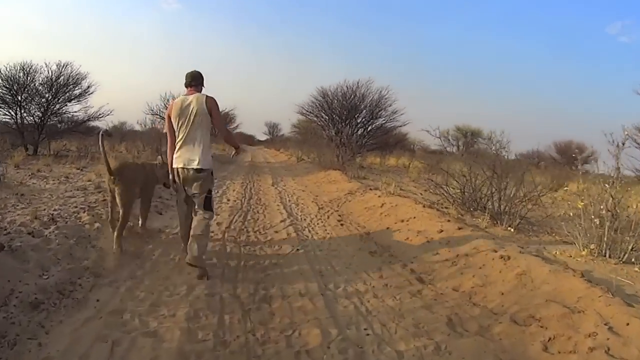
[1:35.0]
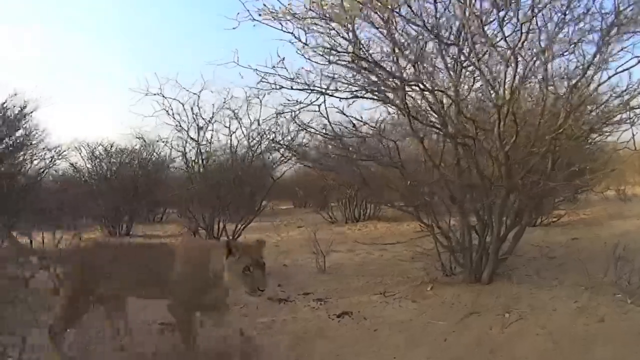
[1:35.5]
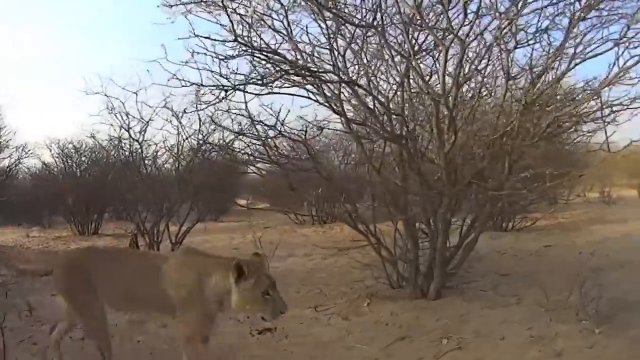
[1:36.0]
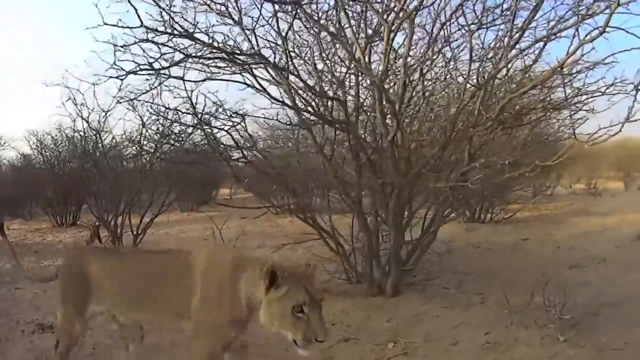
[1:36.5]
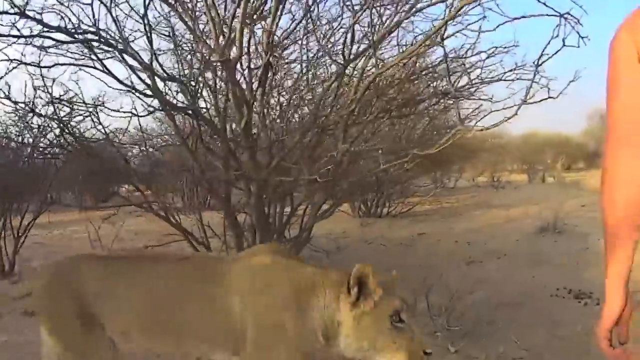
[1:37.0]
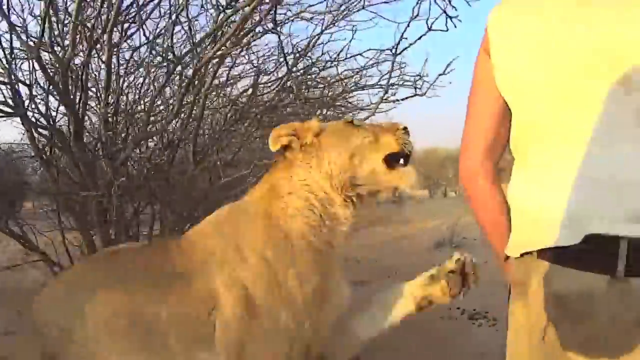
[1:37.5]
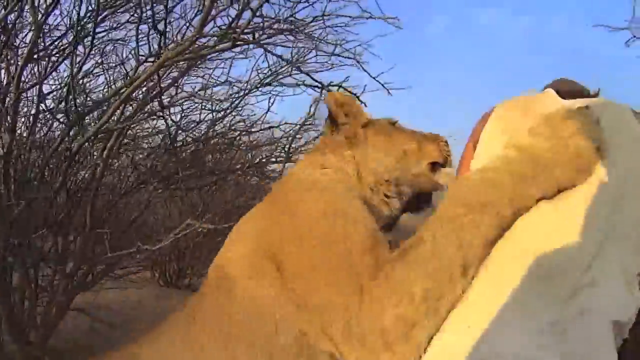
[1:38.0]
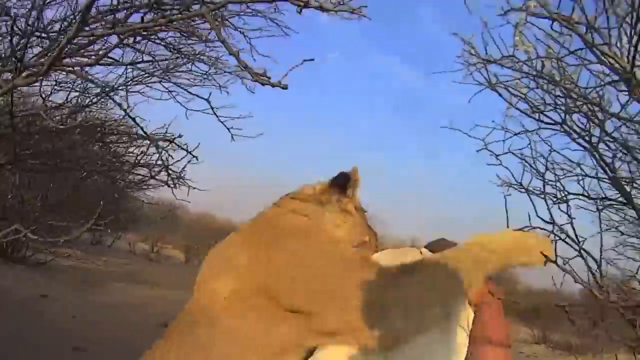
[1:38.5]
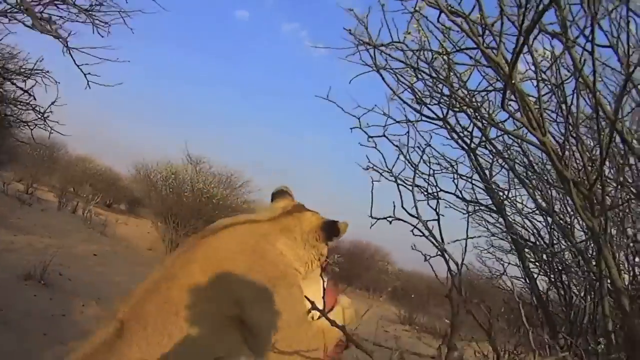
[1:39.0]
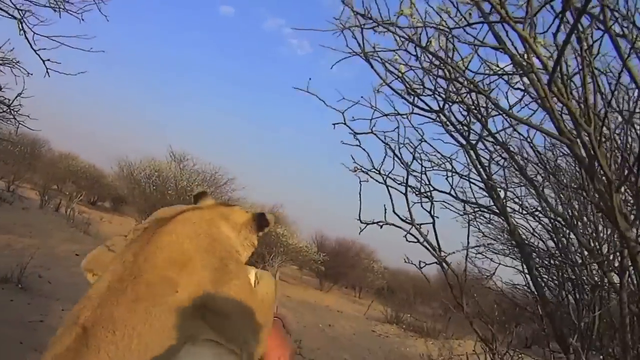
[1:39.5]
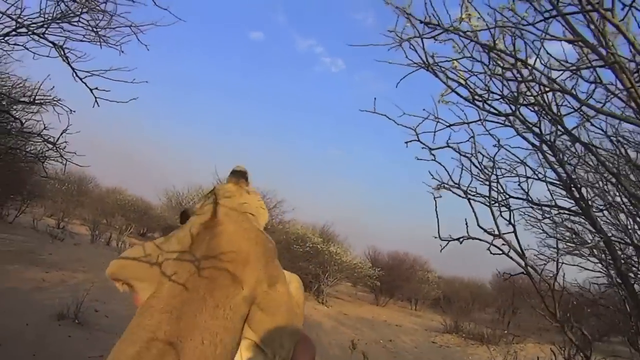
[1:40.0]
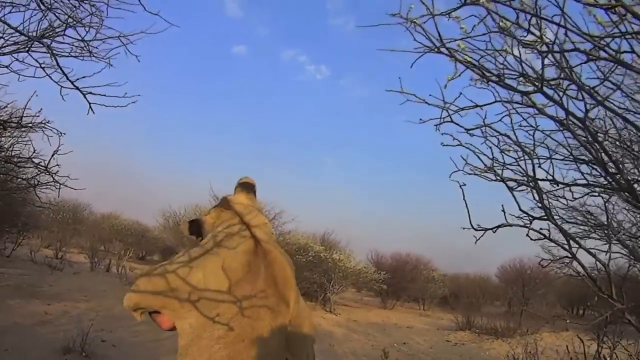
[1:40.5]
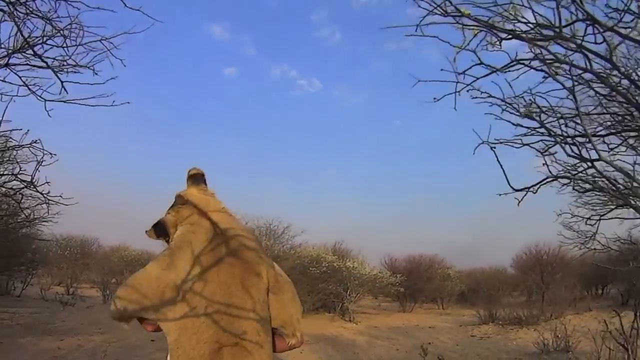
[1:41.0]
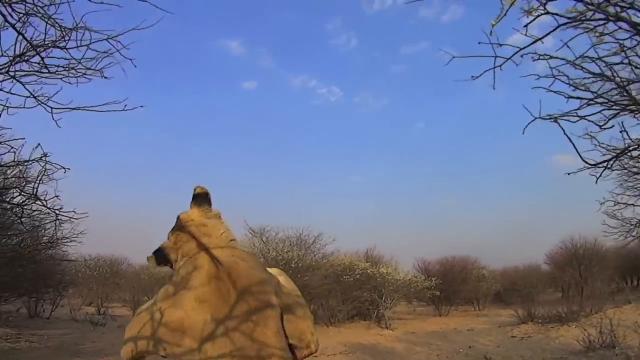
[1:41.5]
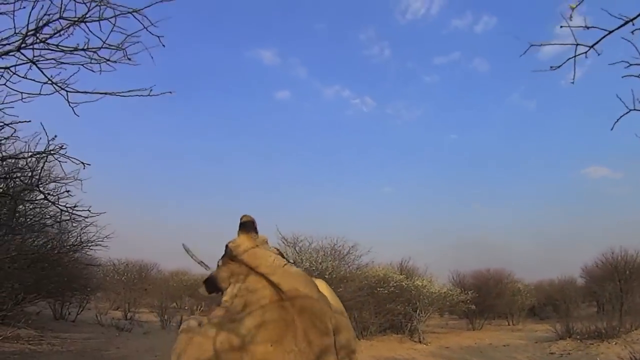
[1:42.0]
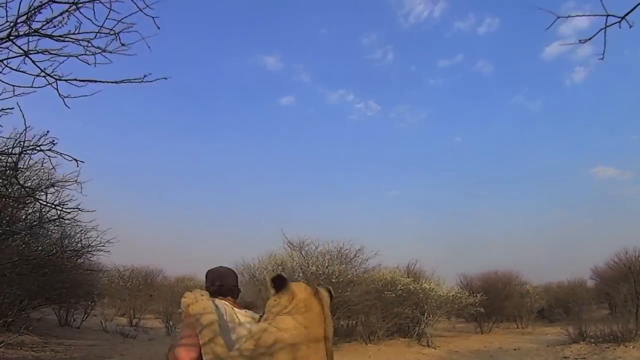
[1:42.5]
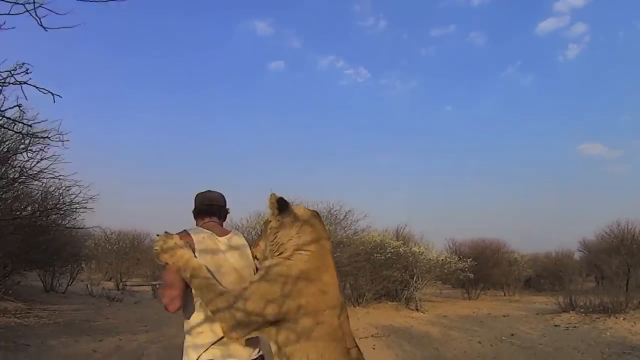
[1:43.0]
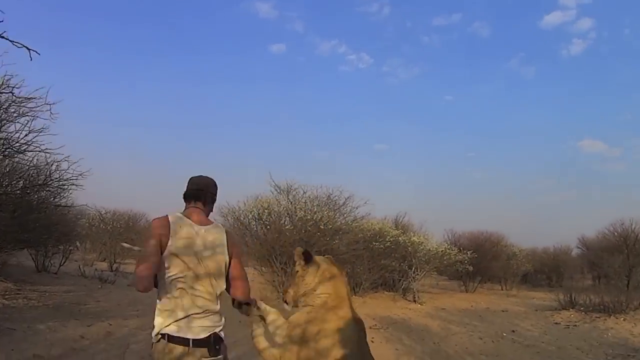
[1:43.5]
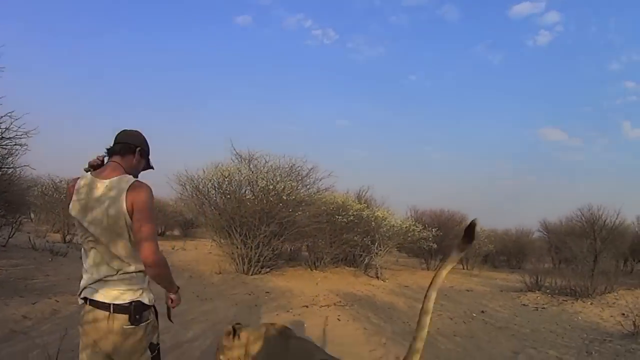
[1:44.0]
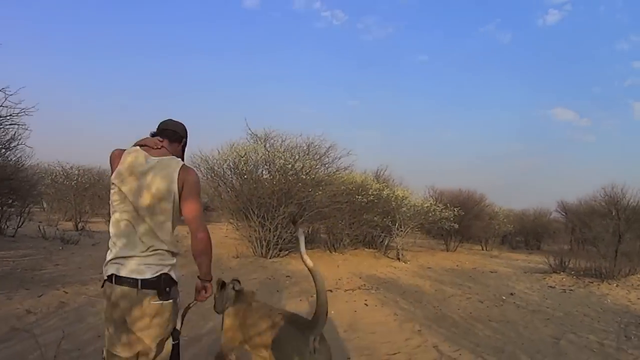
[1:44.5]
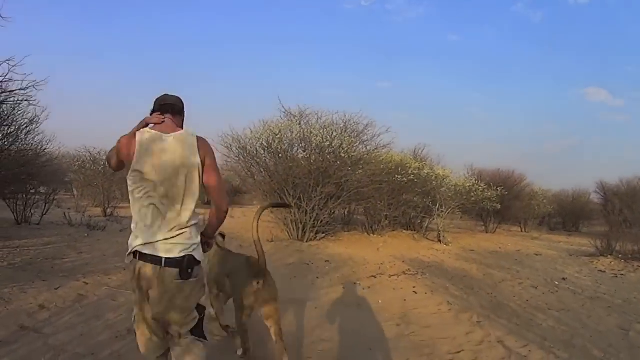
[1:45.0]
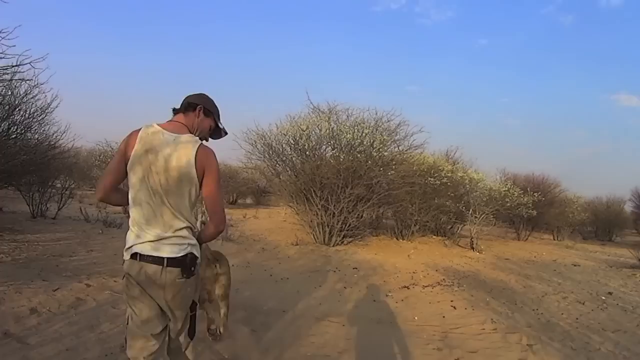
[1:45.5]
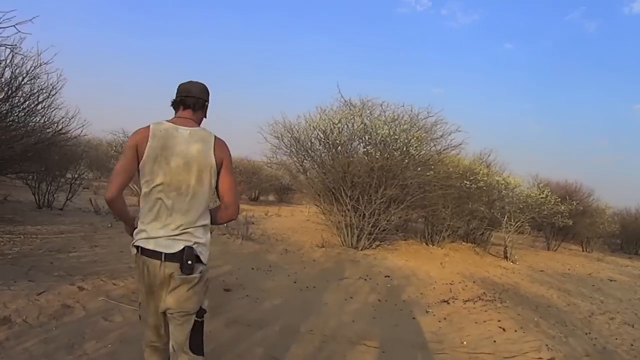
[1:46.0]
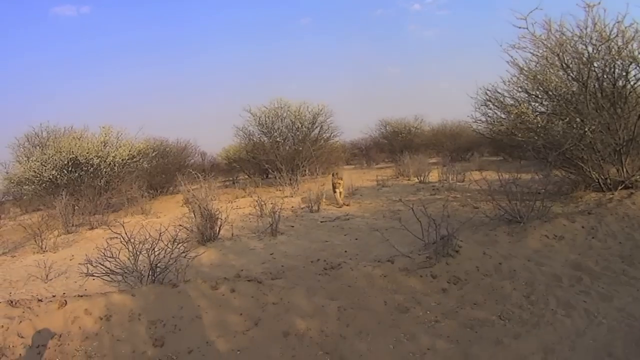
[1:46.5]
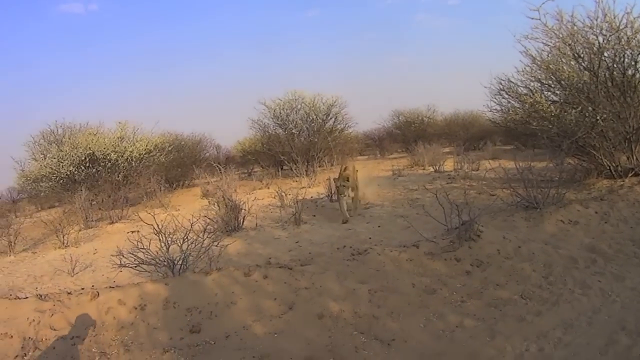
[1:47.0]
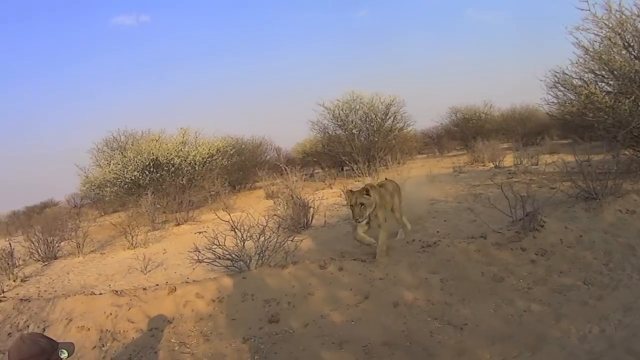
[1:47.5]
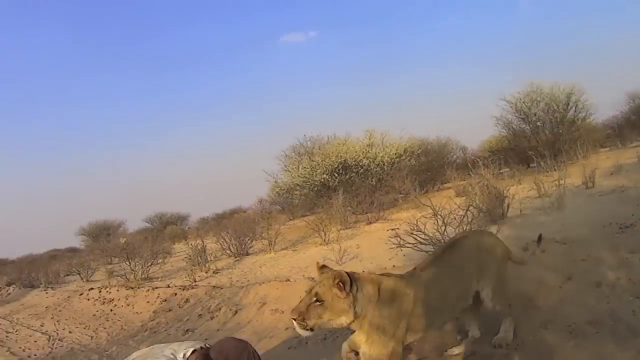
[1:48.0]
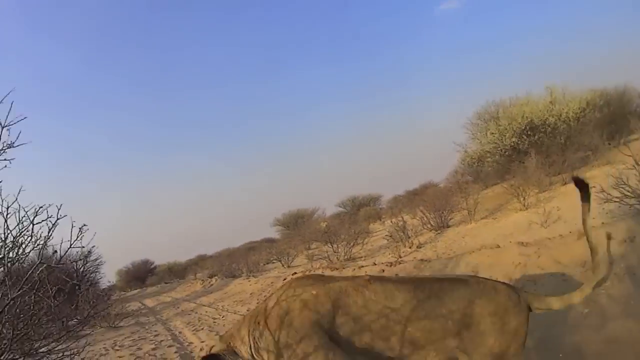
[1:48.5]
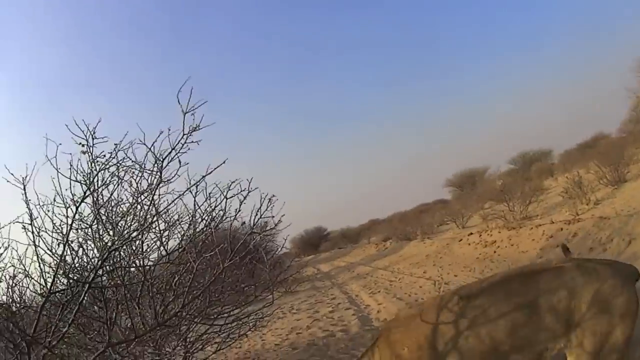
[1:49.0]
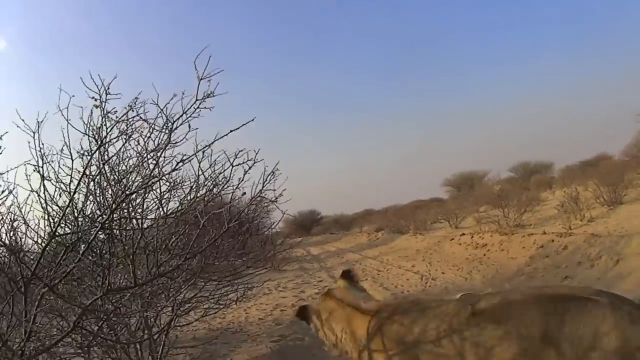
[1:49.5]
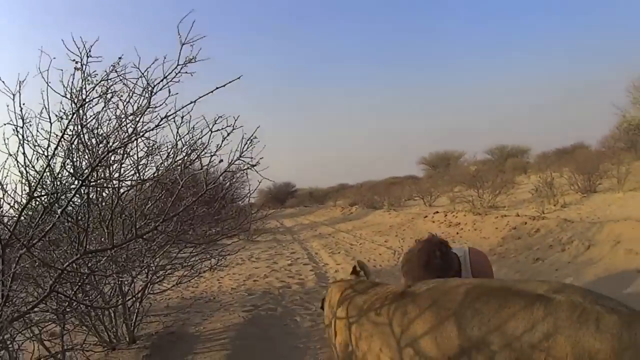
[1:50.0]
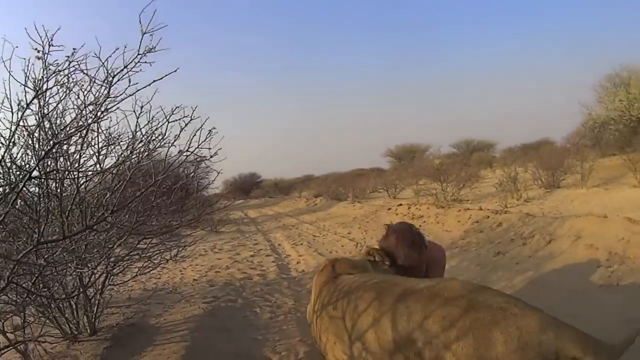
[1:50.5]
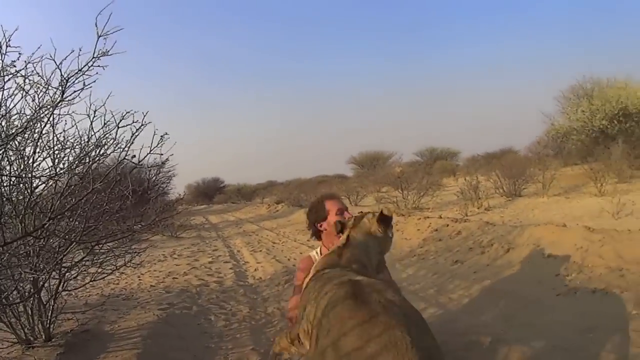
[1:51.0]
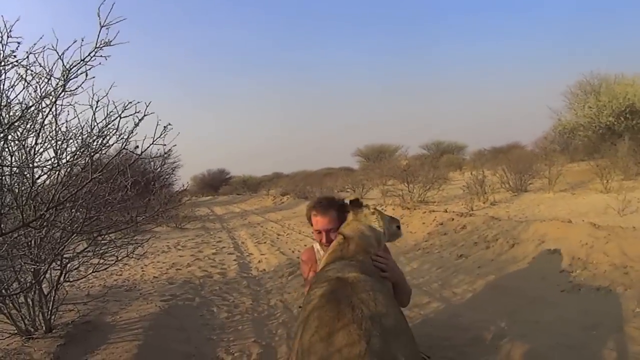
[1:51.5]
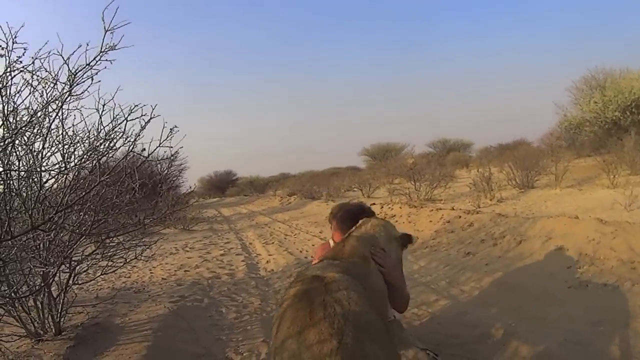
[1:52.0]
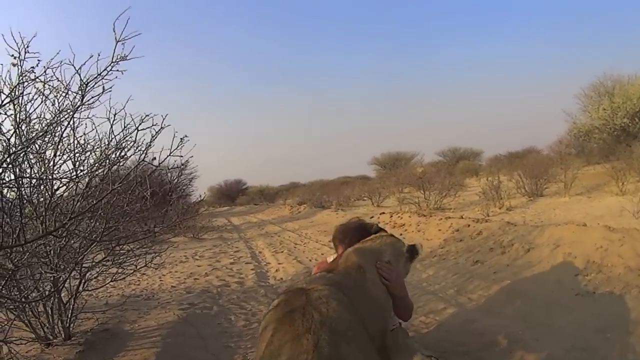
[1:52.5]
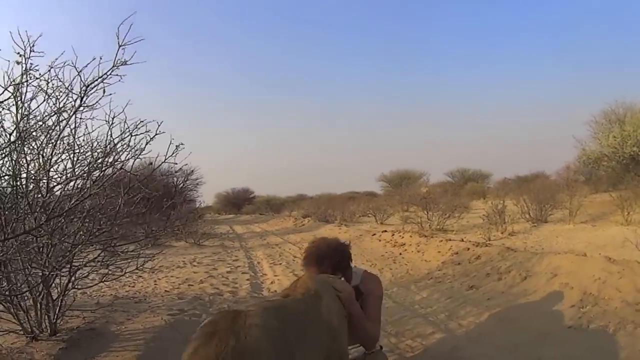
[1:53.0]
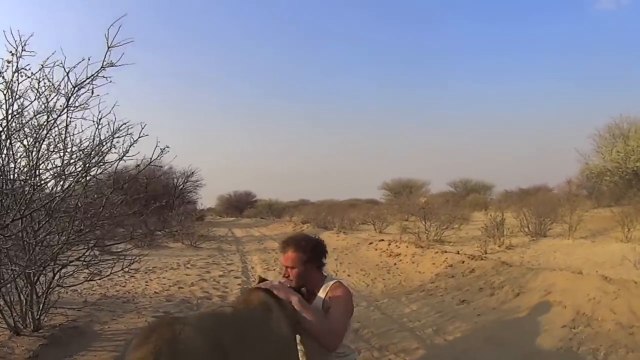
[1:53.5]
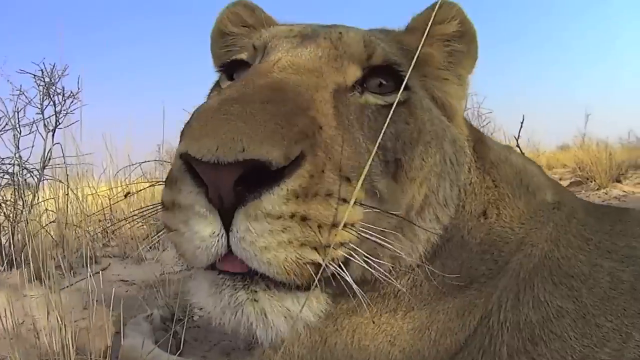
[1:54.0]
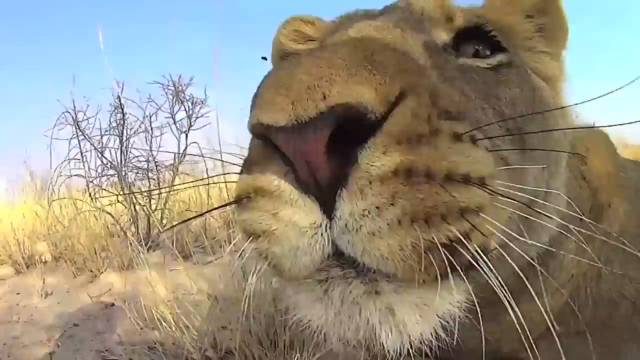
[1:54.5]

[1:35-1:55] The lion comes up behind the man and hugs him; standing up, the lion is about the size of the man. The man does not seem fearful at all and embraces the hug. From the back, the lion looks like a big teddy bear. They also cuddle face to face. At one point the lion's face is shown directly into the camera, as if it is playing with the camera. The lion runs around a little, but for the most part the lion and the man are hugging and cuddling each other affectionately.